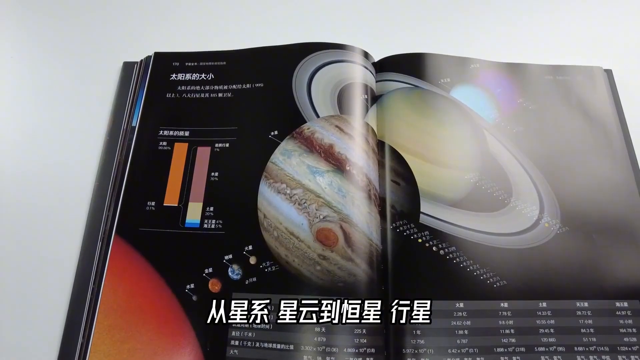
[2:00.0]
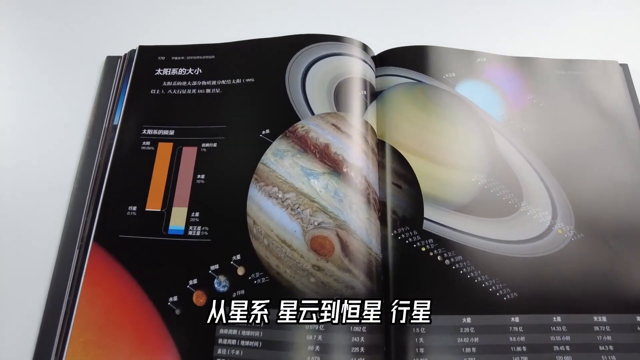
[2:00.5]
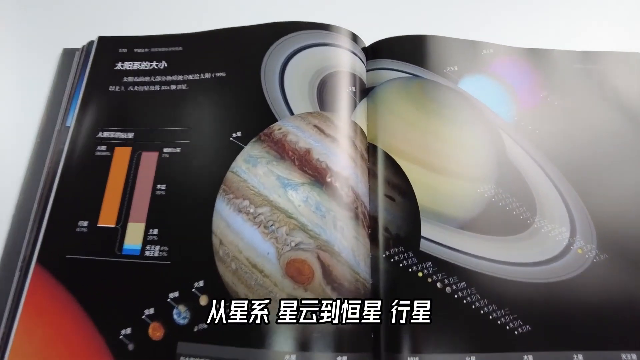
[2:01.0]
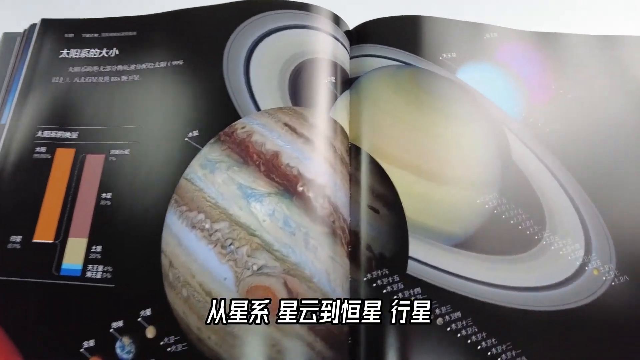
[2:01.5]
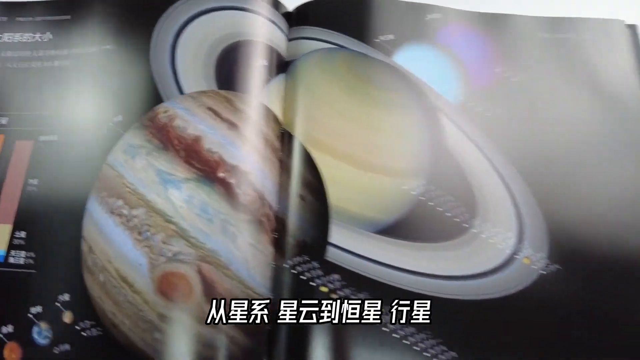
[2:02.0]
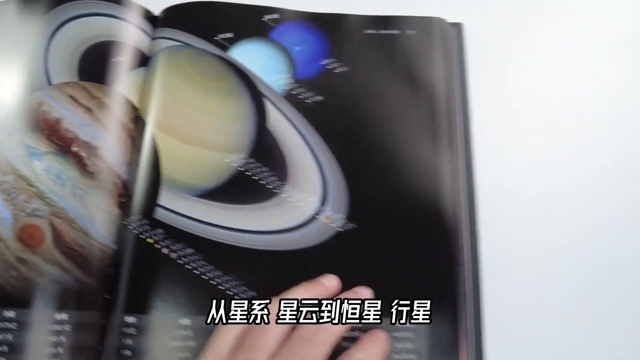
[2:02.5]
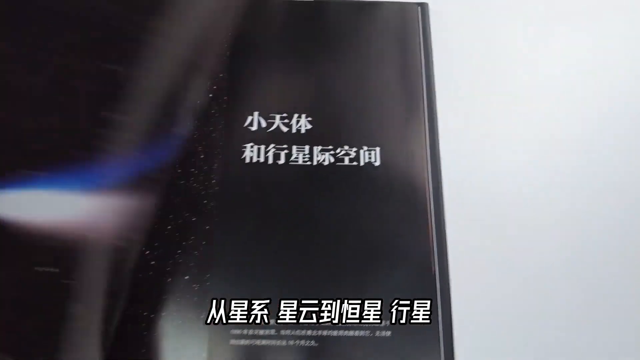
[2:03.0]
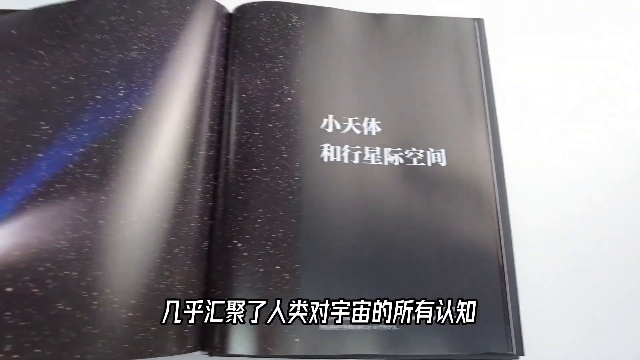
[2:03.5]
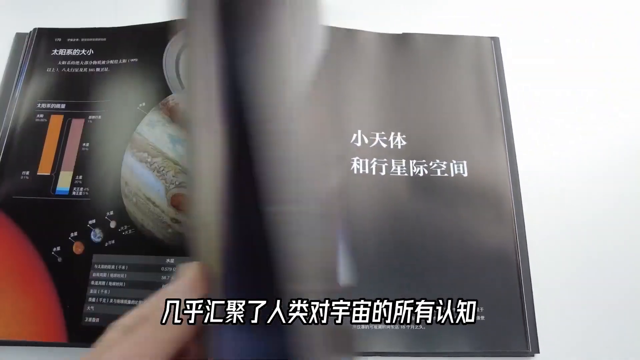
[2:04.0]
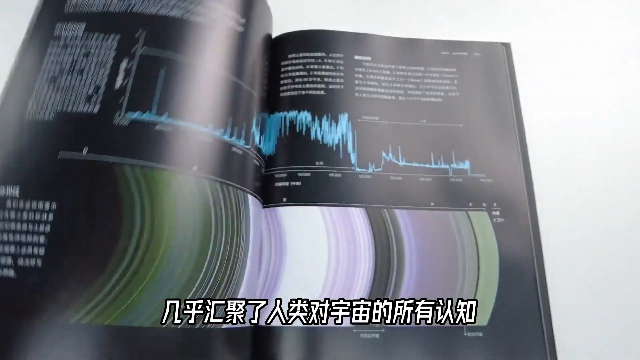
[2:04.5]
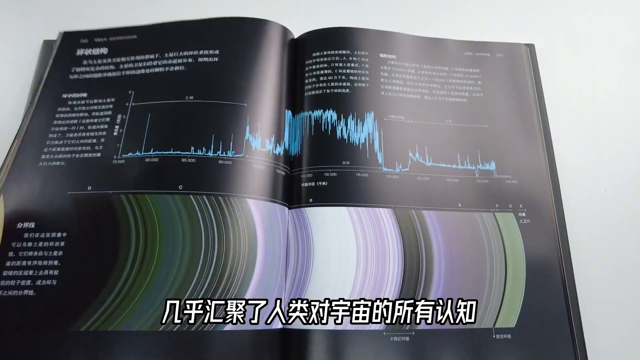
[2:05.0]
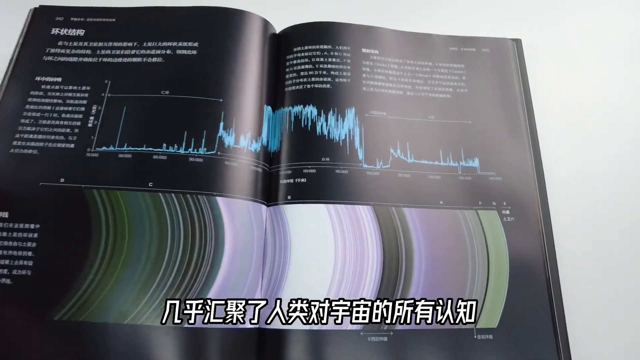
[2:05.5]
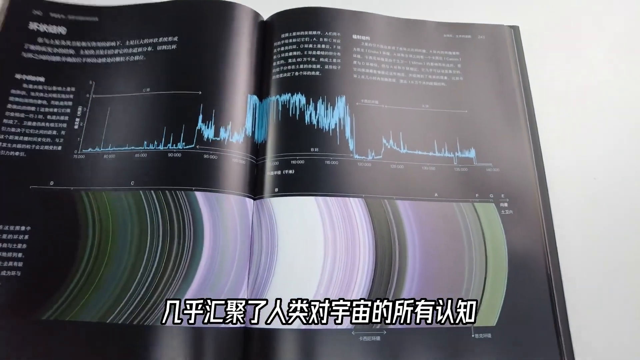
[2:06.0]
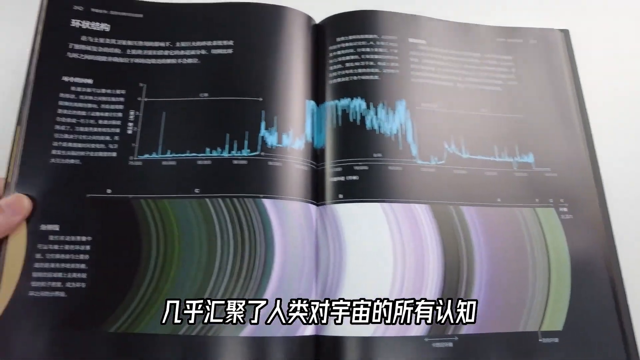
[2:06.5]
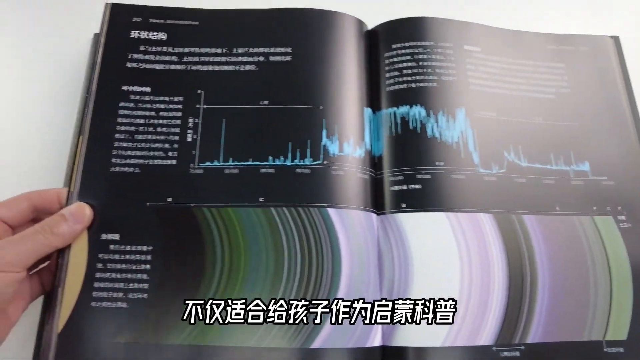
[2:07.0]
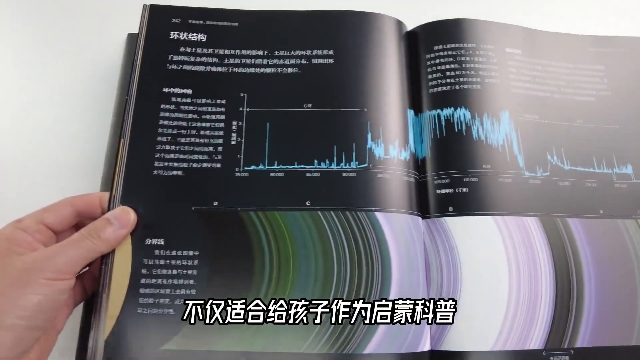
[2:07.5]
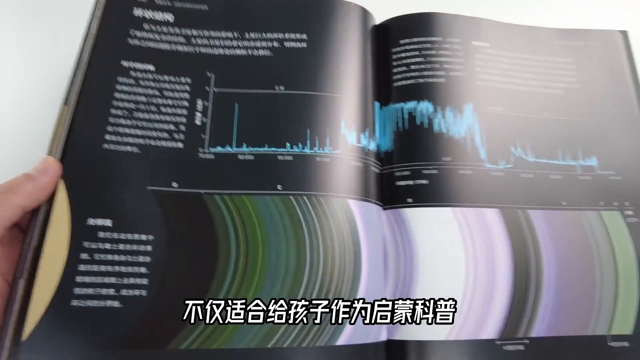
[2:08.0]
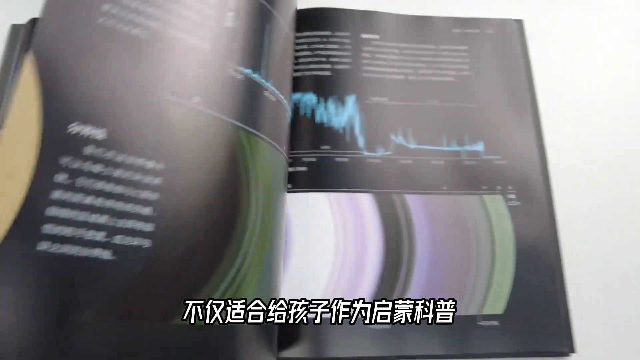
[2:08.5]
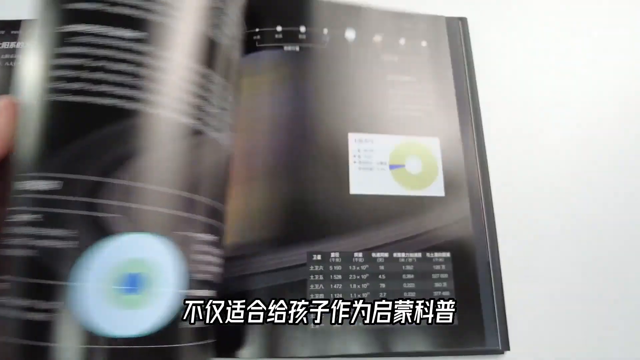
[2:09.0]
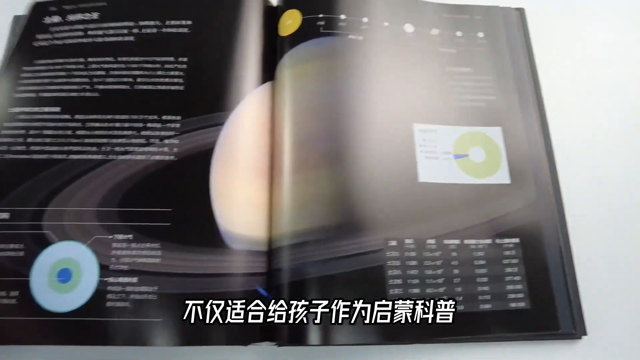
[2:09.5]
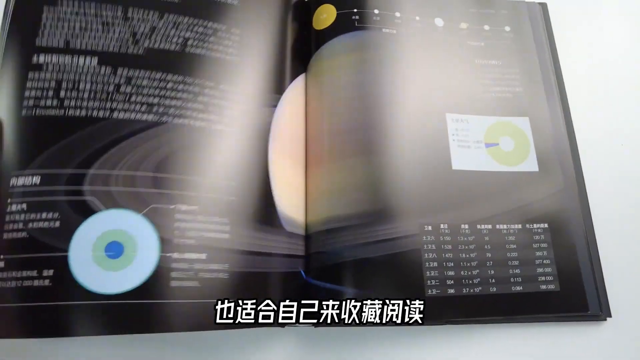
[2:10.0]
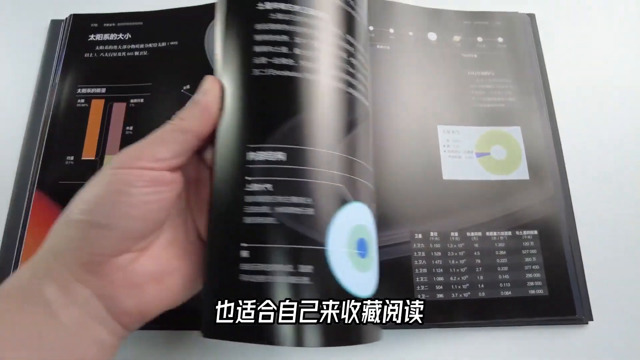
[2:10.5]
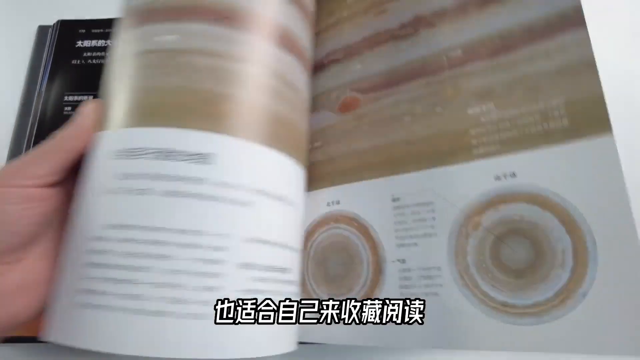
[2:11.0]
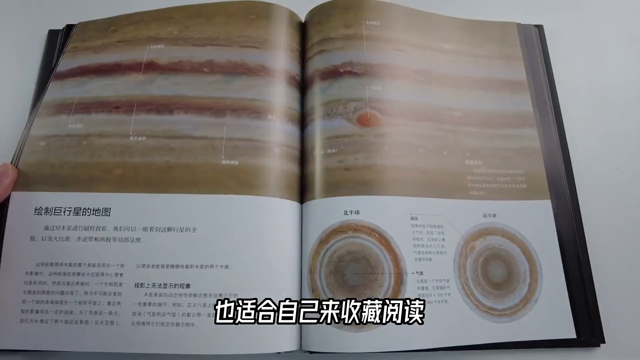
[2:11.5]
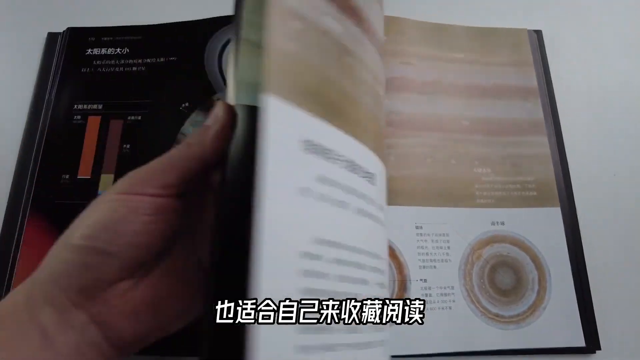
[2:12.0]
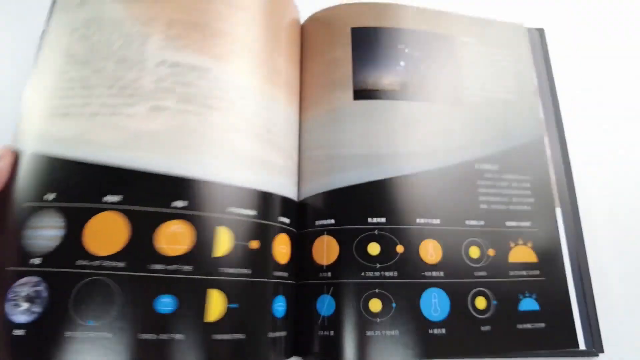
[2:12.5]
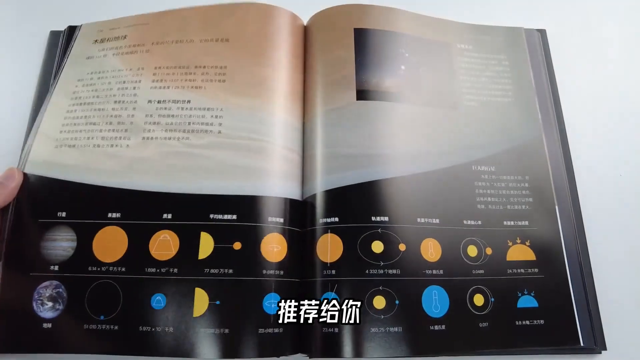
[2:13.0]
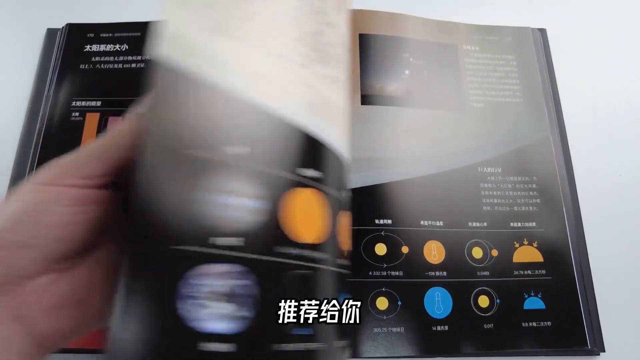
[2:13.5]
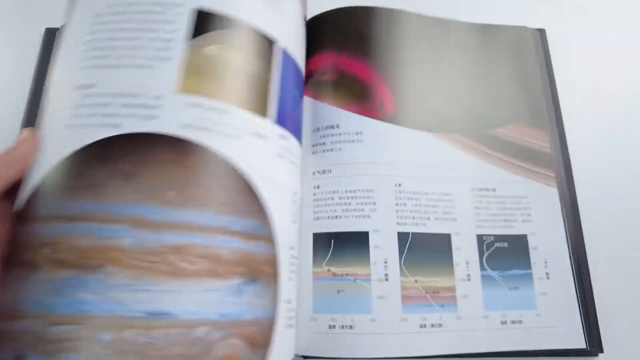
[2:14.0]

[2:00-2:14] A close-up shows a couple of pages from a National Geographic hardcover book on outer space, with an illustrated close-up of several planets lined up next to one another; four planets can be seen. The man holding the book turns the page. The next pages have a black background with white Chinese text at the top and on the left side, and a large graph in the middle stretching across both pages. Below the graph is what appears to be an image representing the rings around the planet. The man then flips through various other pages. One page shows a close-up of a peach-colored planet surrounded by multiple rings, and the page after that shows a close-up of the rings with two diagrams detailing them.